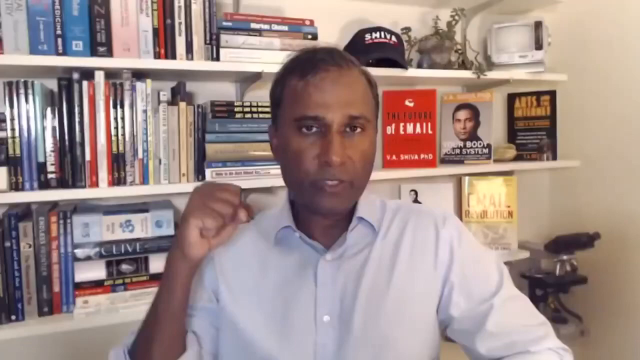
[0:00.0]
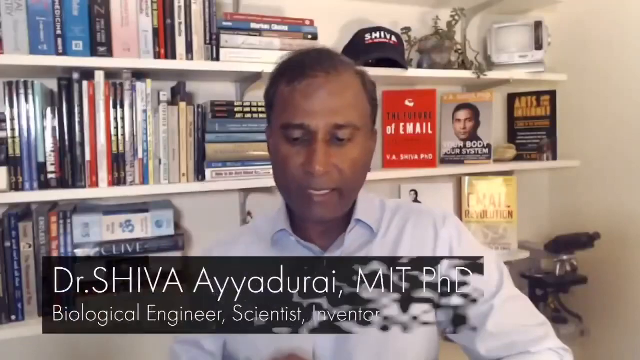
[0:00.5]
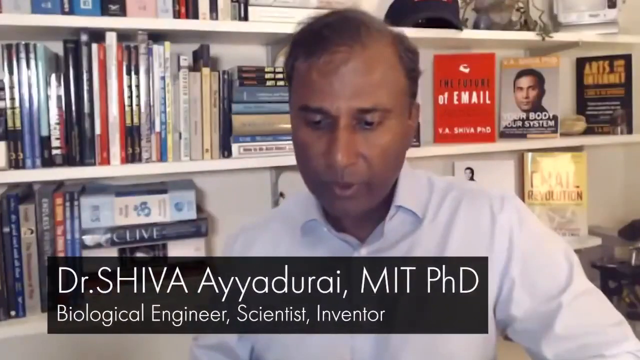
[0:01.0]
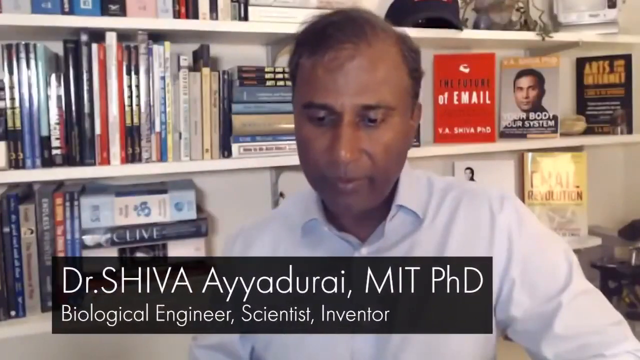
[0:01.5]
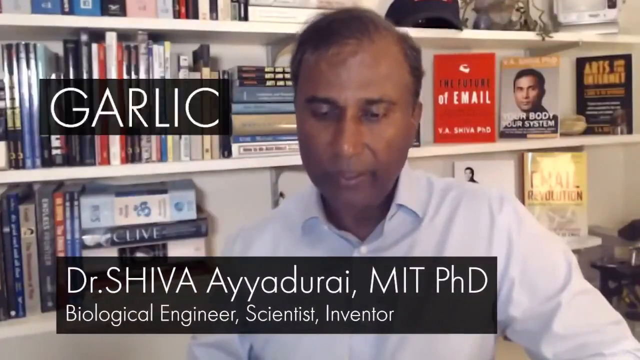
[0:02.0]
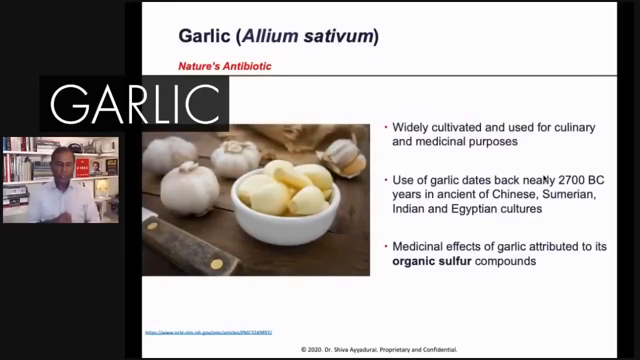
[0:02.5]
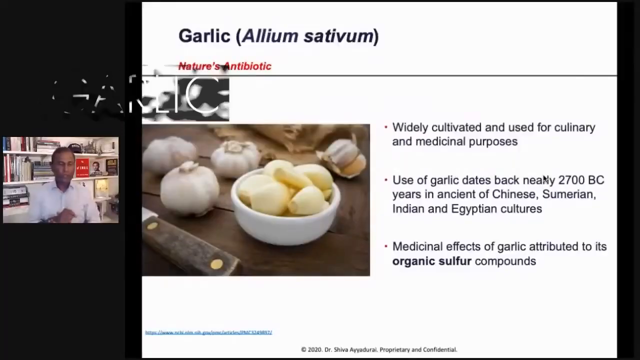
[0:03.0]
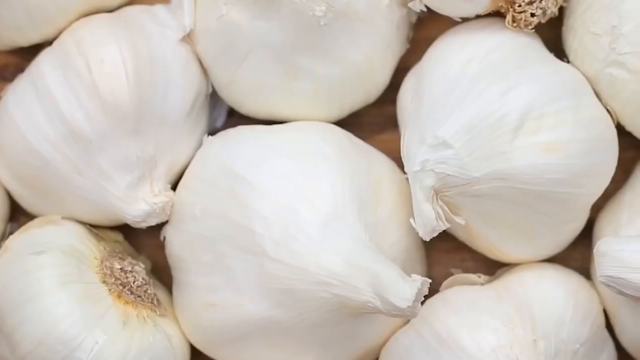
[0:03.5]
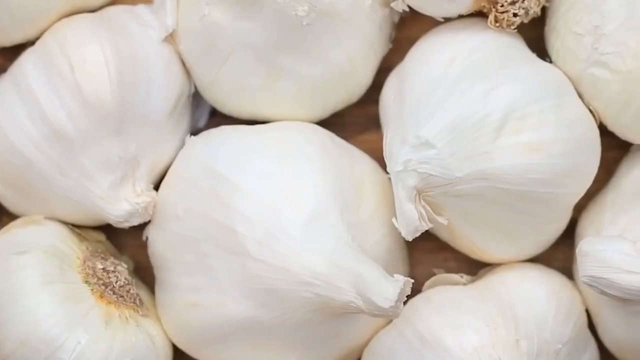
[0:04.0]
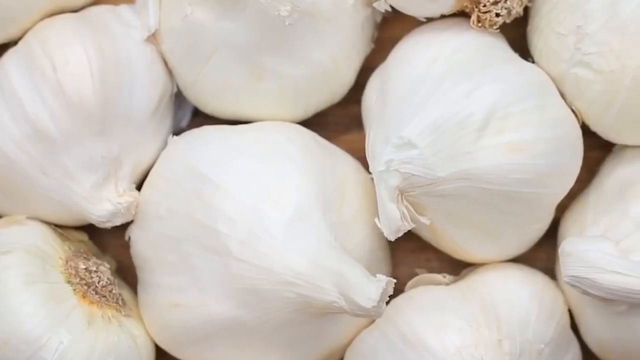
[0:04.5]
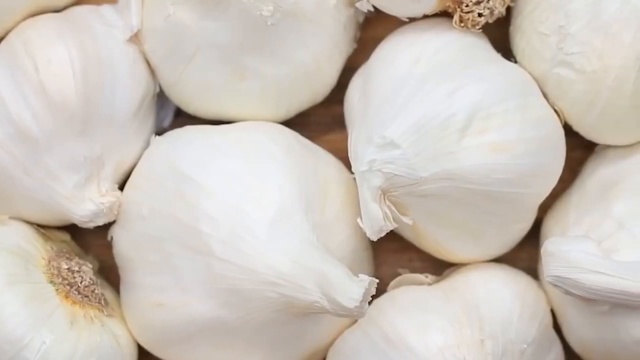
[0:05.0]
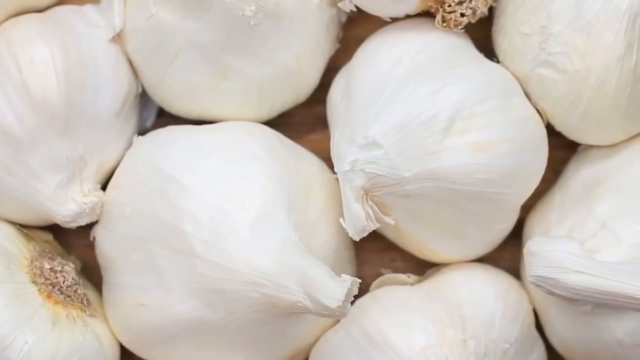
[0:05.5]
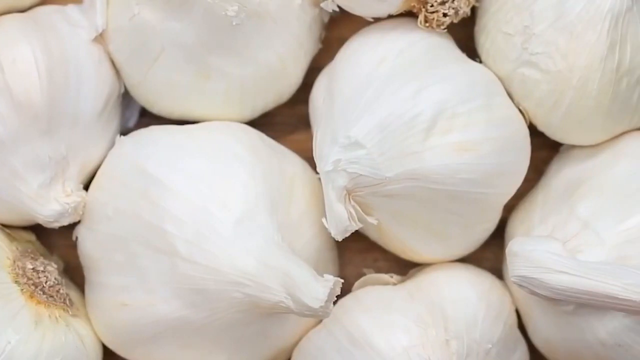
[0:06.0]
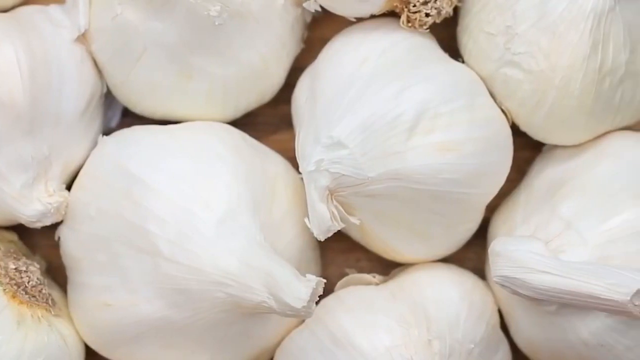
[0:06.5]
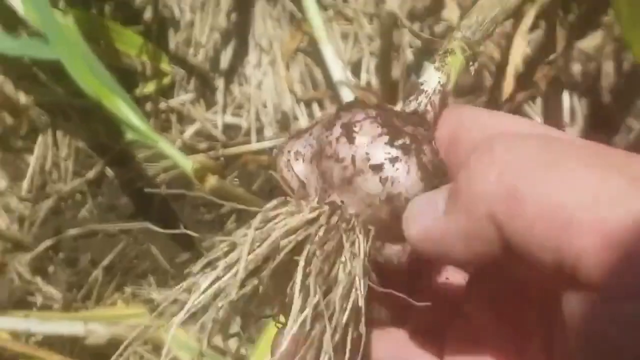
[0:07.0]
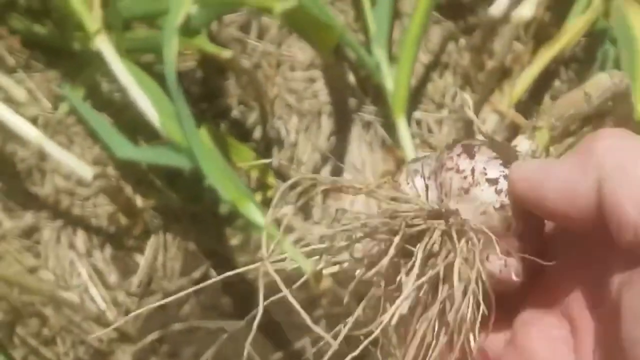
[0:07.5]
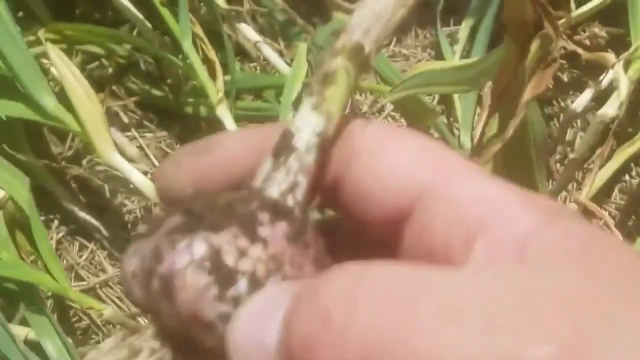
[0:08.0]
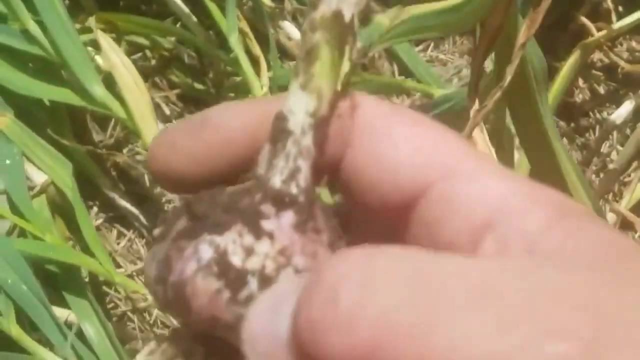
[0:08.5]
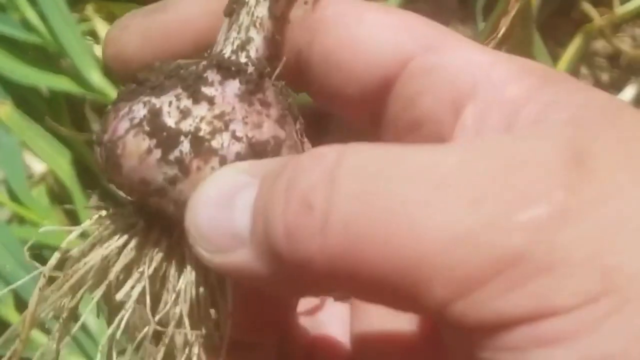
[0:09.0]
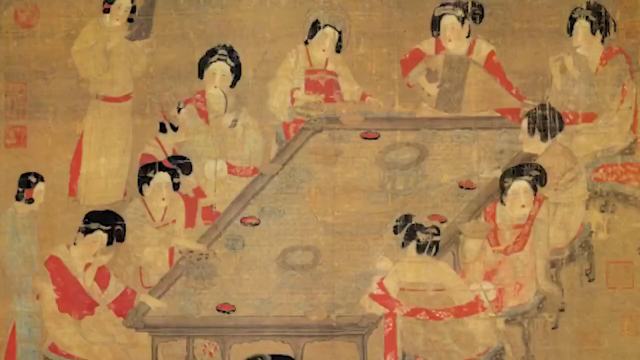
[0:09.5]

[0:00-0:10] The video opens with a very short shot of a man talking to a camera, probably in his home, with shelves full of books behind him. He is dark-skinned with very short hair and wears a light blue shirt. A black text box appears at the bottom of the screen reading, in larger type, "Dr. Shiva Ayyadurai, MIT PhD", and right underneath, "Biological Engineer, scientist, inventor". For a very brief moment, another black box with white text reading "GARLIC" appears in the upper part of the video. The shot of the man and the lower text box then disappear, while the smaller "GARLIC" box stays on screen briefly. A new image appears, probably from an online call: on the left is a very small version of the video of the man talking to the camera in his home, and on the right, taking up most of the screen, is a PowerPoint page. At the very top is the title "Garlic (Allium Sativum)", with smaller red text underneath reading "nature's antibiotic" and a black line dividing this part from the rest. Below, on the left, is a picture of garlic: a small white bowl containing garlic slices, with a knife and some garlic pieces still to be peeled around it. On the right are three points of text. The first reads "widely cultivated and used for culinary and medicinal purposes". The second reads "use of garlic dates back nearly 2,700 BC" and refers to ancient Chinese, Sumerian, Indian, and Egyptian cultures. The last reads "medicinal effect of garlic attributed to its organic sulfur compounds". The "GARLIC" text box then fades away, and the video changes to a close-up picture of multiple pieces of garlic that slides slowly to the right. Next, a person holds a garlic plant just taken from the ground, still dirty with soil, surrounded by other garlic plants.